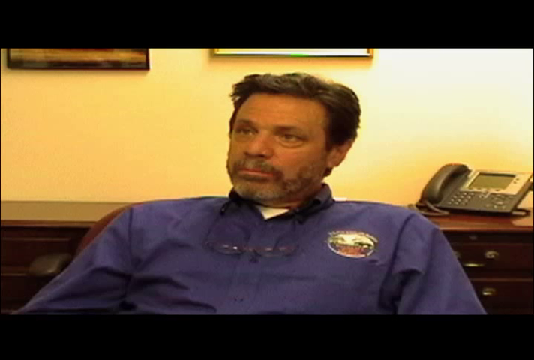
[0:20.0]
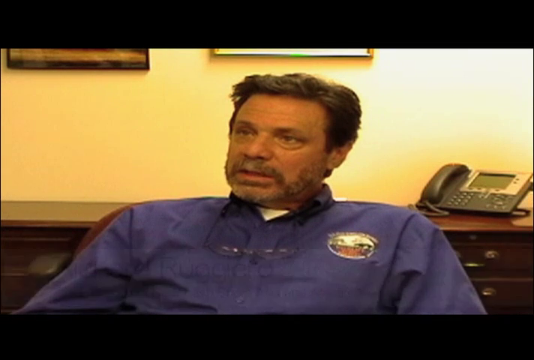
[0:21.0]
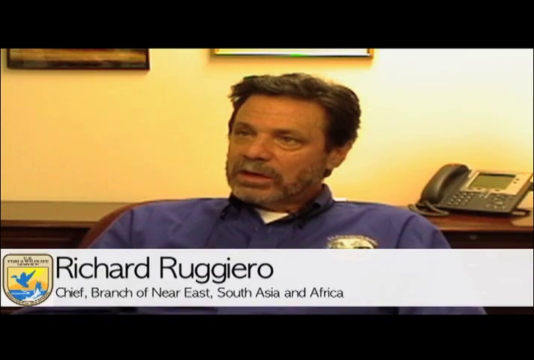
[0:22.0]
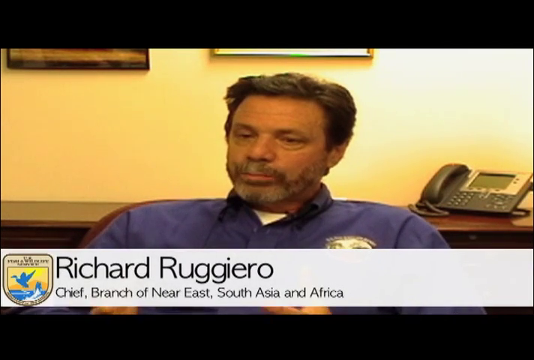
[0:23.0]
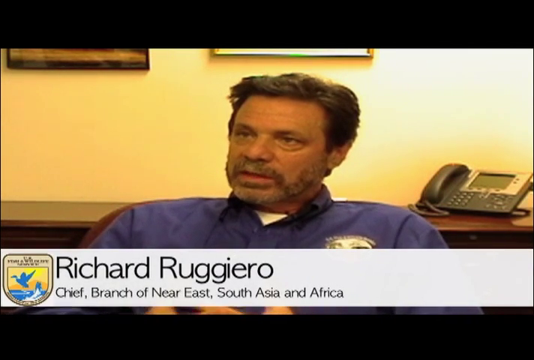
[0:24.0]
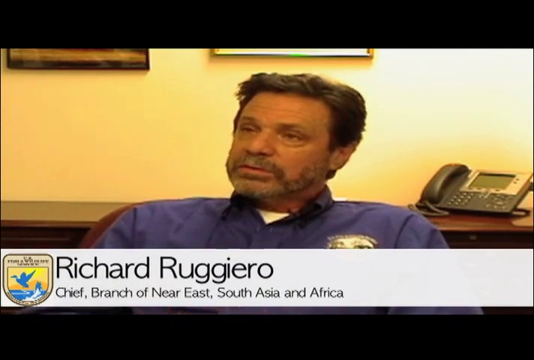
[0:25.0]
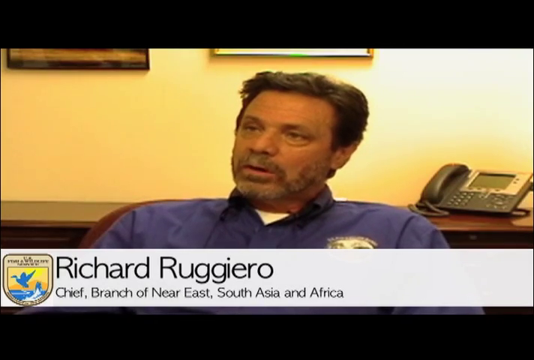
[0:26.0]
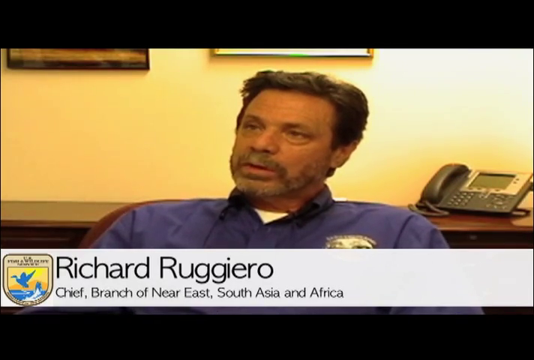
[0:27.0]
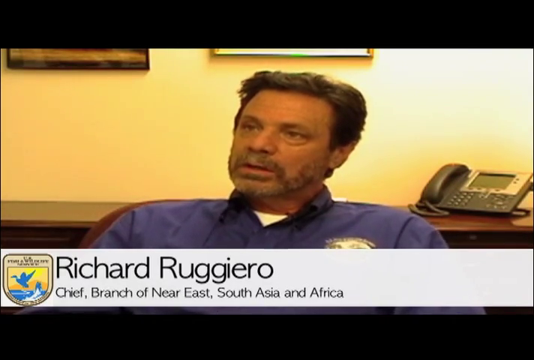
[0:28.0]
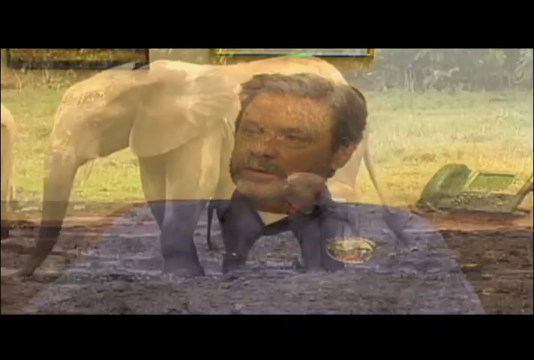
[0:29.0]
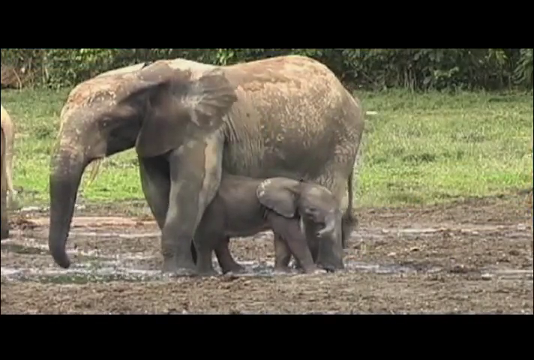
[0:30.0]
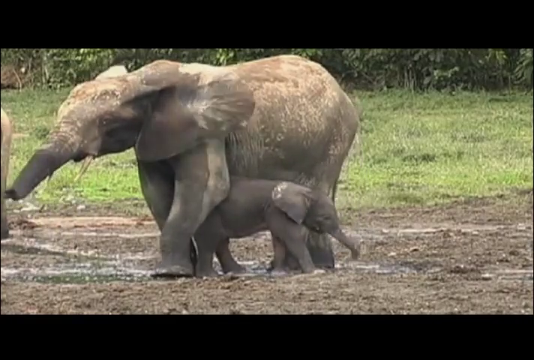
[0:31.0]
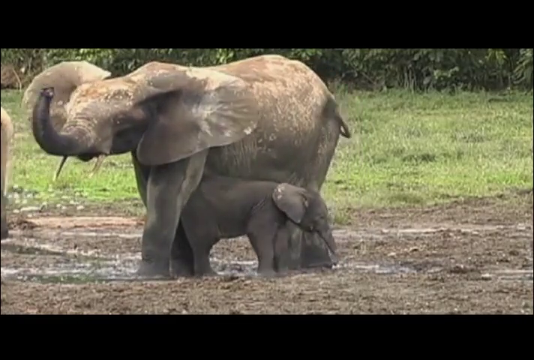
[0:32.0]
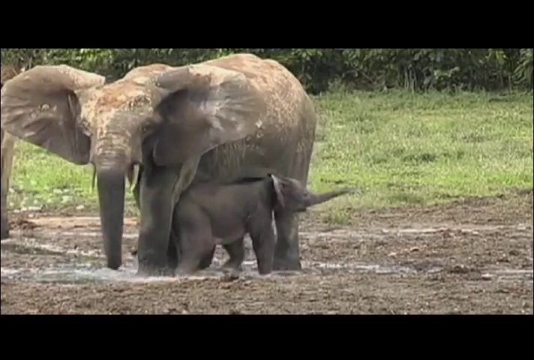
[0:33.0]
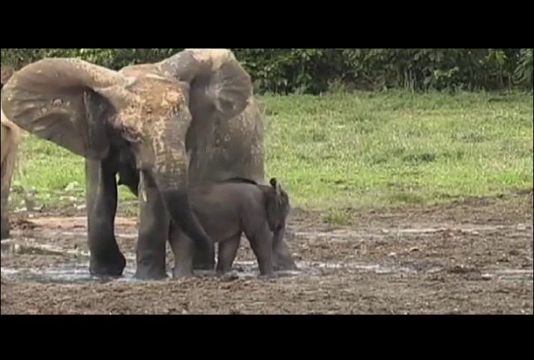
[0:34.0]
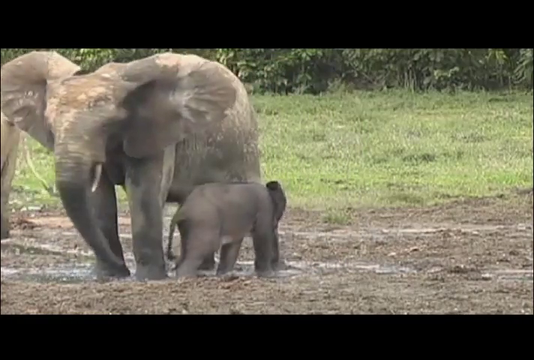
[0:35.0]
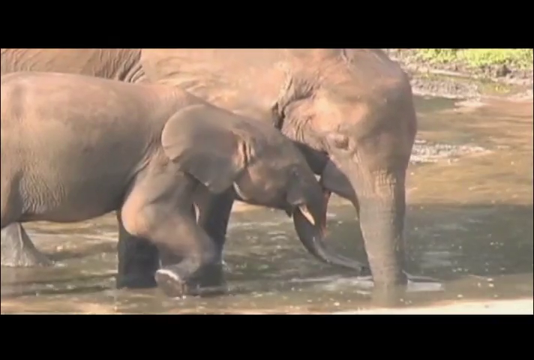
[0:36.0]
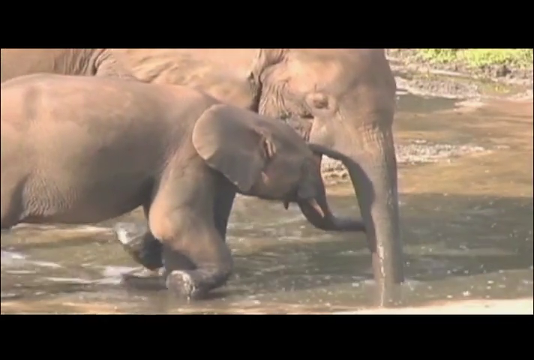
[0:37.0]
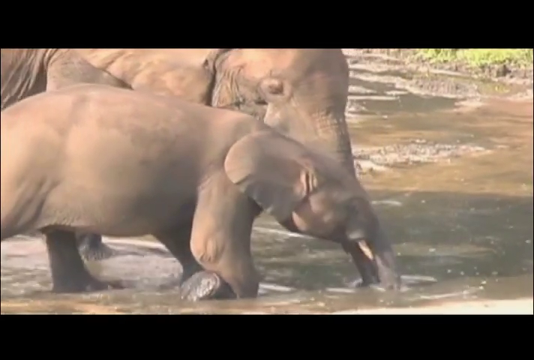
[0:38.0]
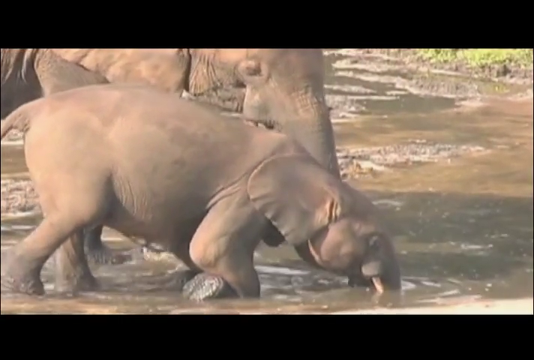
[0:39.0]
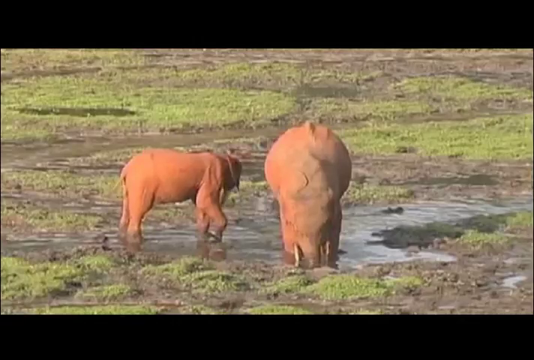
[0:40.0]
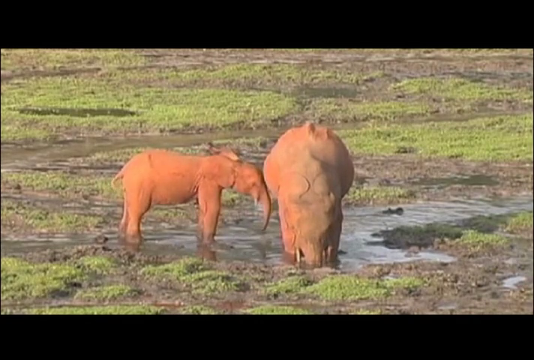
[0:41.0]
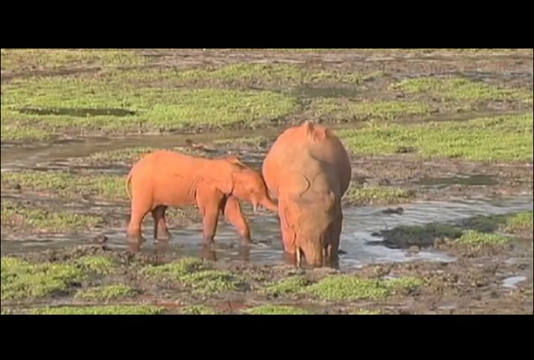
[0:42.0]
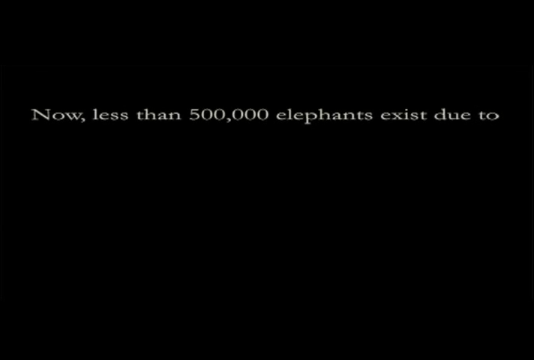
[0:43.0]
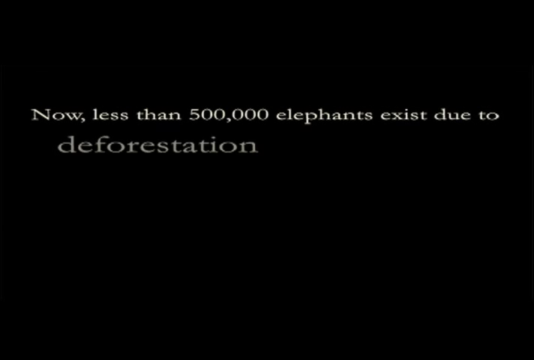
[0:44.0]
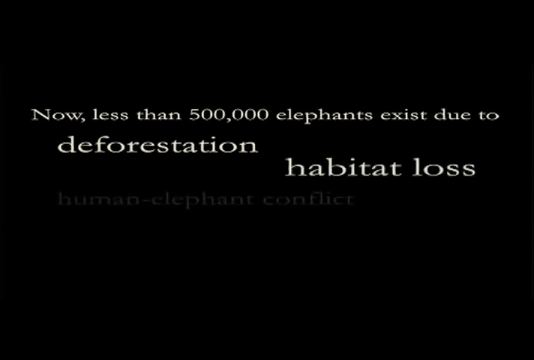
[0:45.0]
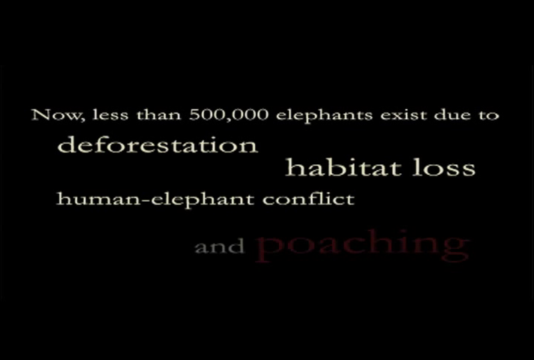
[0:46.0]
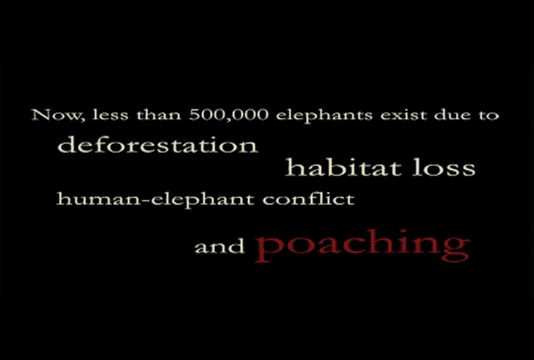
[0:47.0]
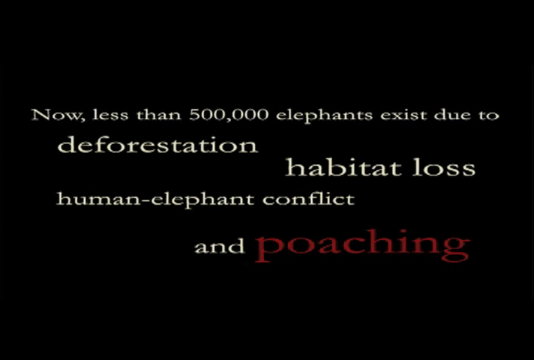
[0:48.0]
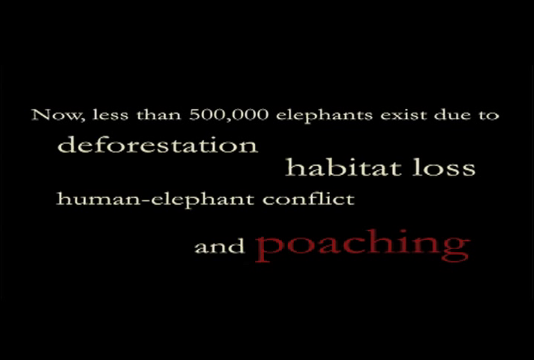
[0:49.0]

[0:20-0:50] A man in a chair in an office is talking. As he speaks, an overlay bar at the bottom of the screen with a Fish and Wildlife emblem reads "Richard Ruggiero, chief branch of Near East, South Asia, and Africa." The video cuts to a mother elephant with a baby under her belly, standing in a patch of mud where the water appears to have been drying up. She walks forward, her knee touches the baby, and the baby startles. Another mother and baby elephant appear; the mother's trunk is down in the water, and there looks to be more water here. The baby puts its trunk into the water and pushes its little face all the way down into it. Another mother and baby are in another area of the water: the mother's face is in the water, and the baby is at a right angle to her with its little face and trunk against her stomach. The screen goes black, and white text reads "now less than 500,000 elephants exist due to deforestation, habitat loss, human-elephant conflict, and" followed by the word "poaching" in red.